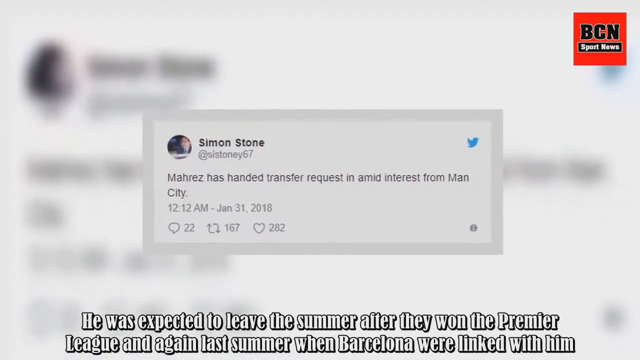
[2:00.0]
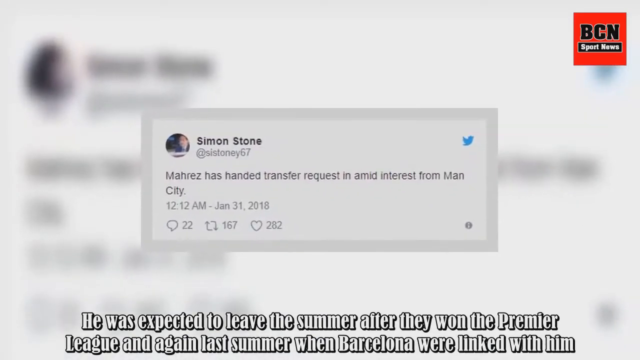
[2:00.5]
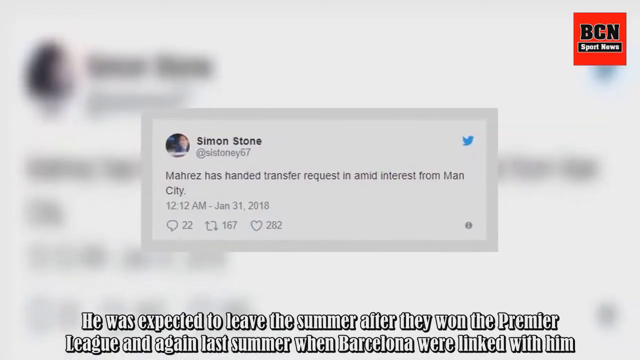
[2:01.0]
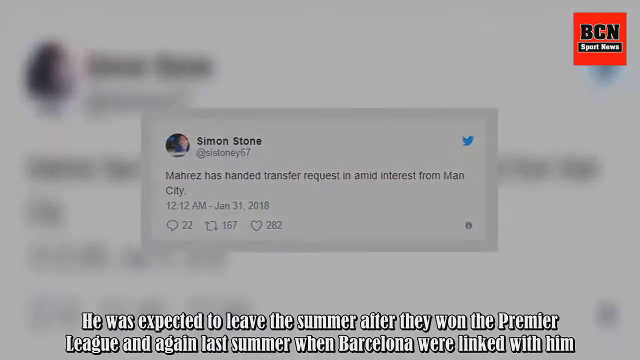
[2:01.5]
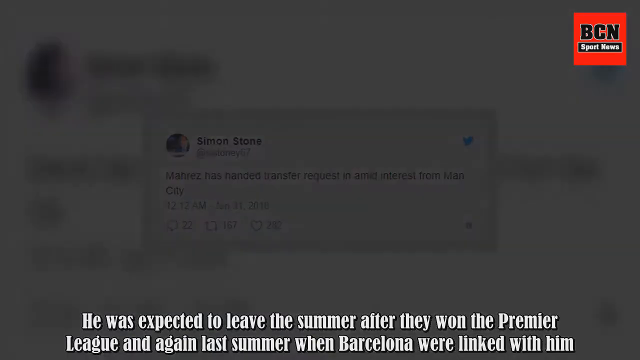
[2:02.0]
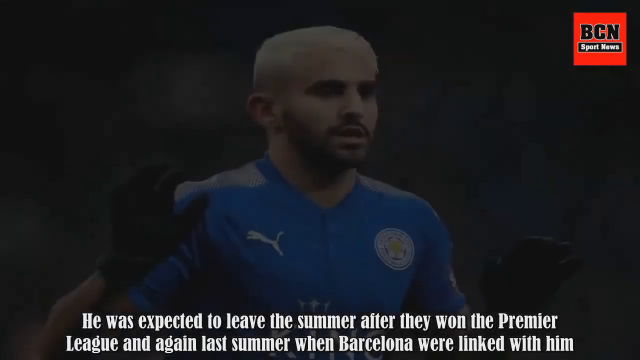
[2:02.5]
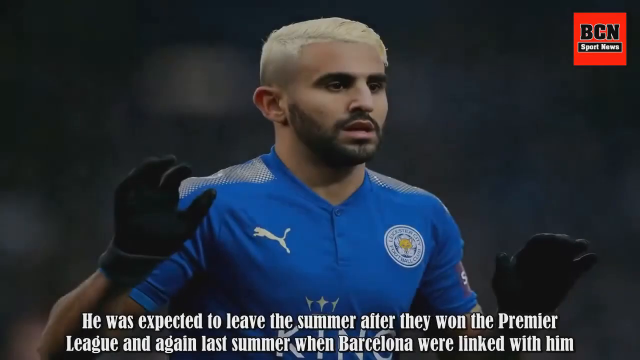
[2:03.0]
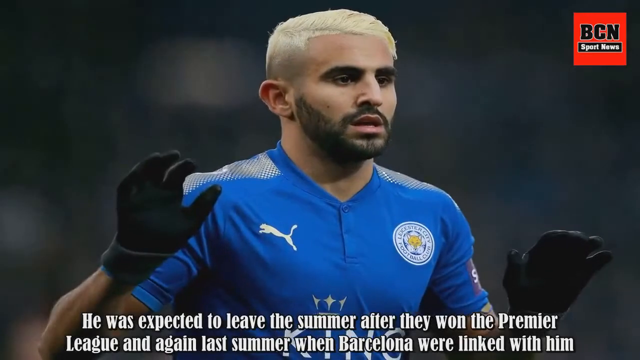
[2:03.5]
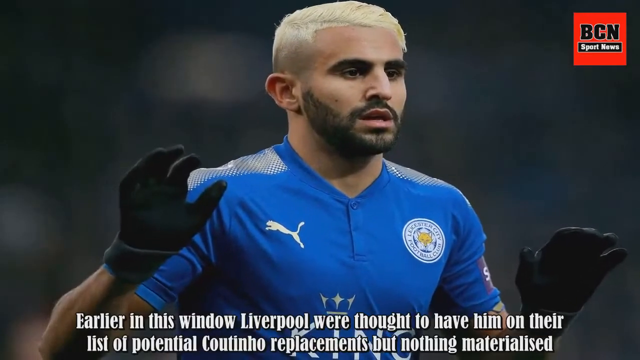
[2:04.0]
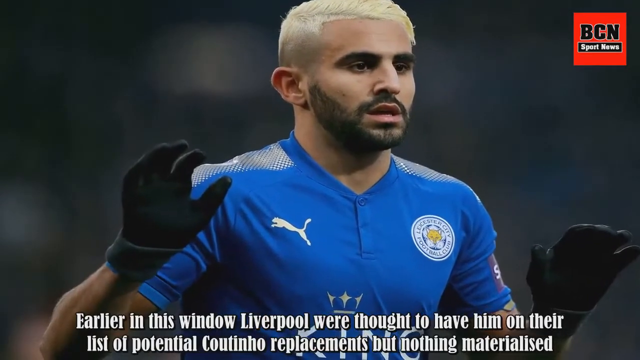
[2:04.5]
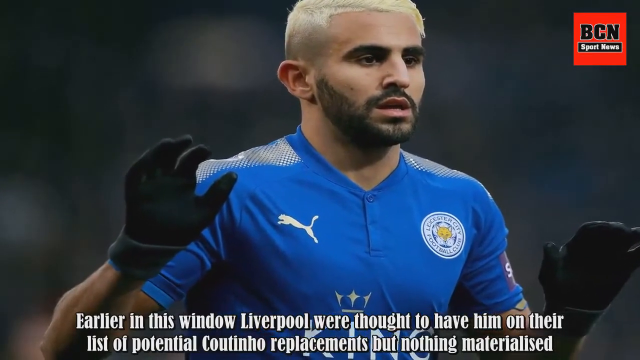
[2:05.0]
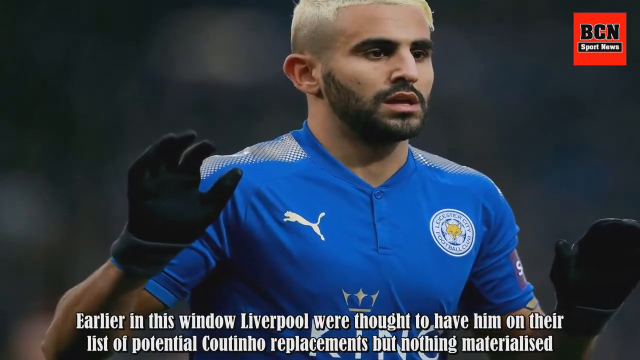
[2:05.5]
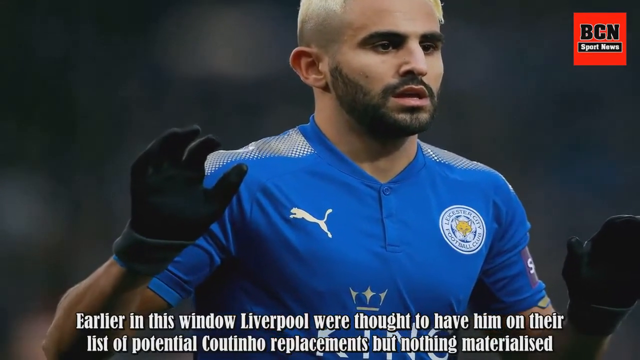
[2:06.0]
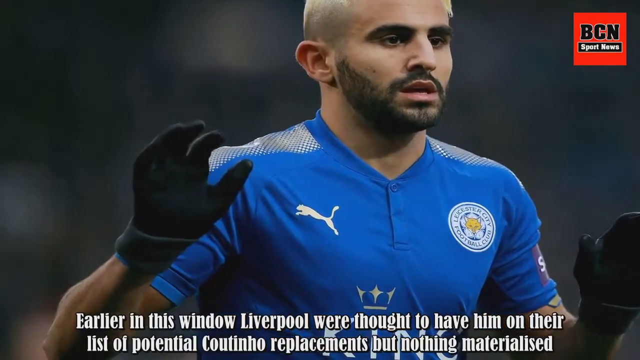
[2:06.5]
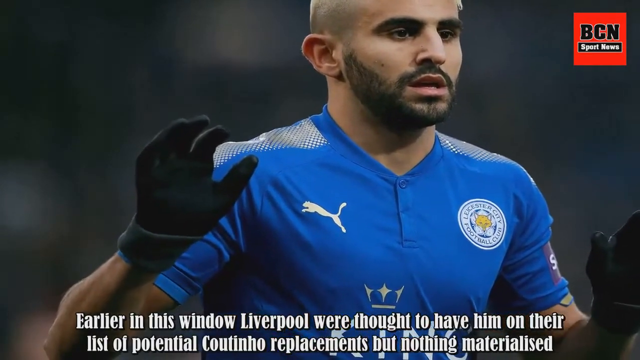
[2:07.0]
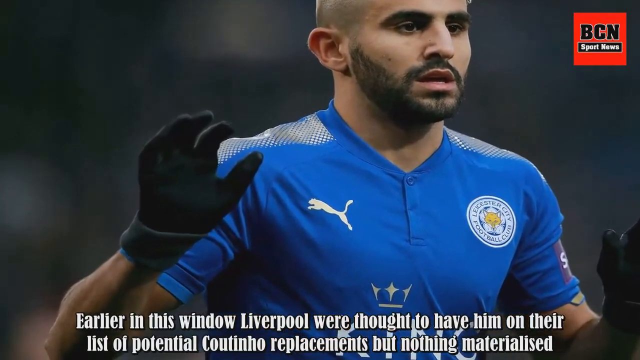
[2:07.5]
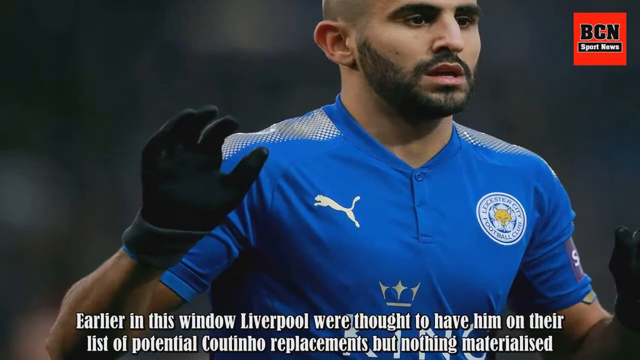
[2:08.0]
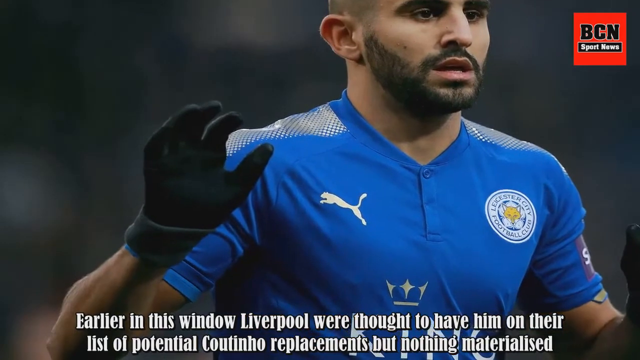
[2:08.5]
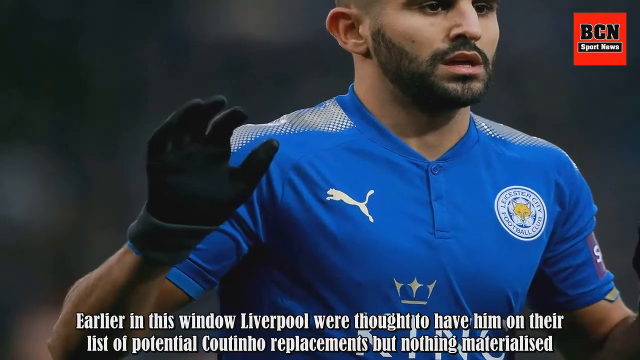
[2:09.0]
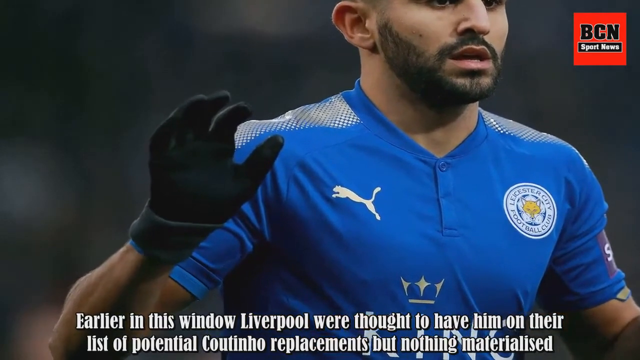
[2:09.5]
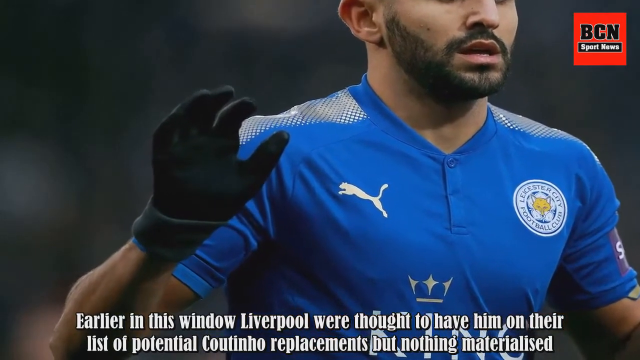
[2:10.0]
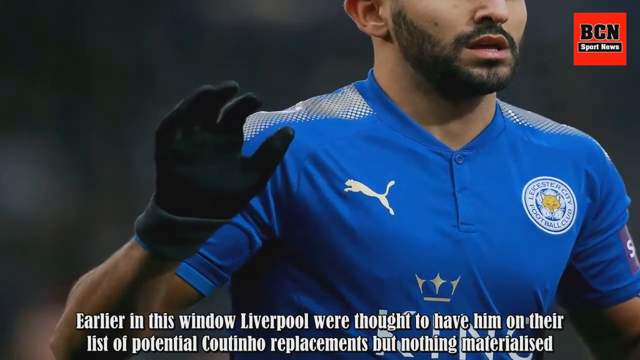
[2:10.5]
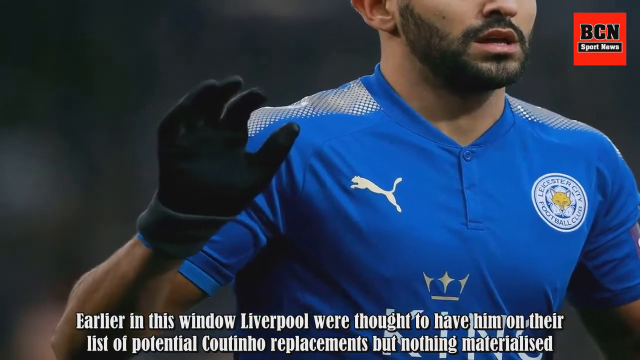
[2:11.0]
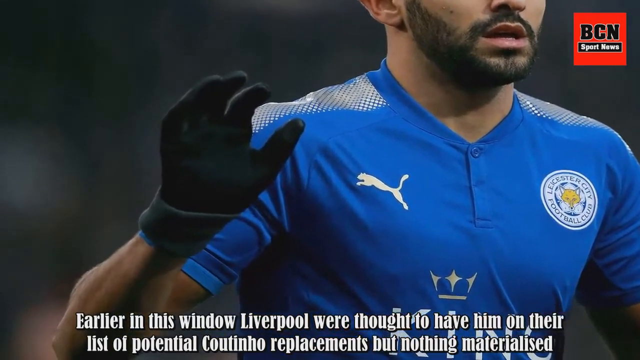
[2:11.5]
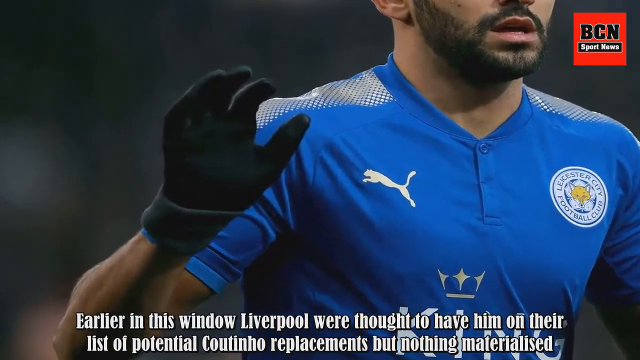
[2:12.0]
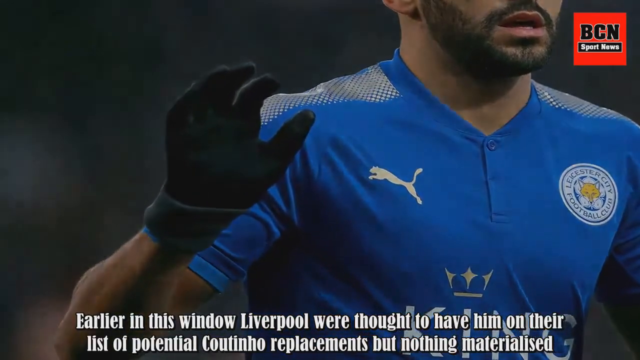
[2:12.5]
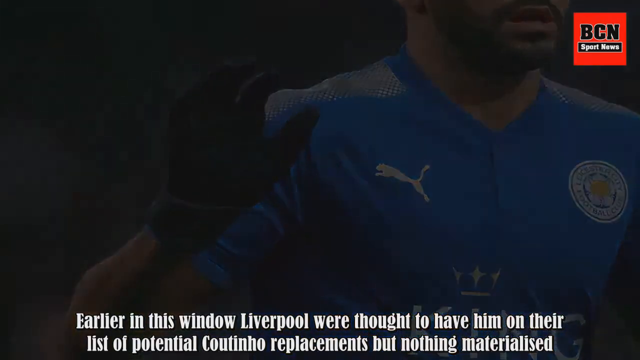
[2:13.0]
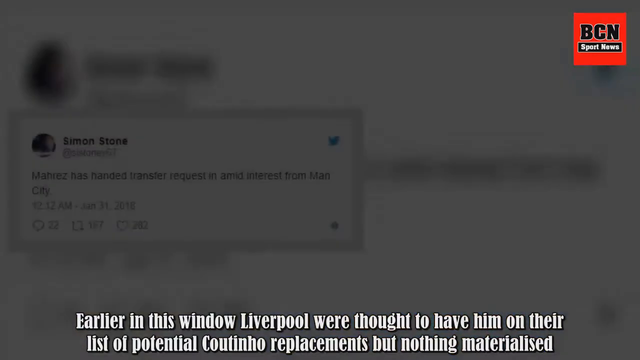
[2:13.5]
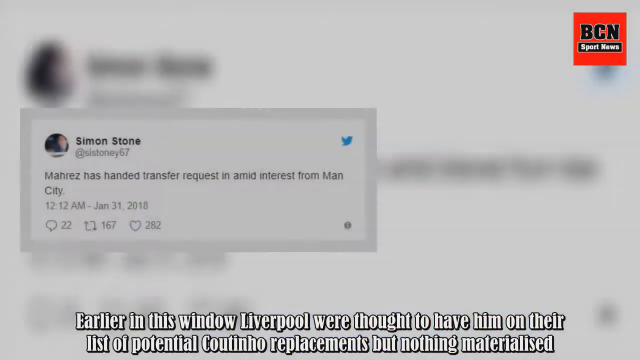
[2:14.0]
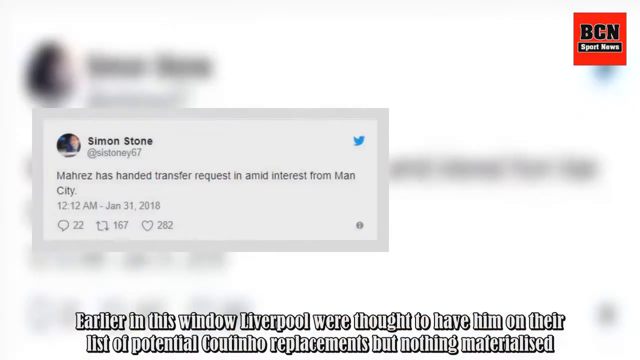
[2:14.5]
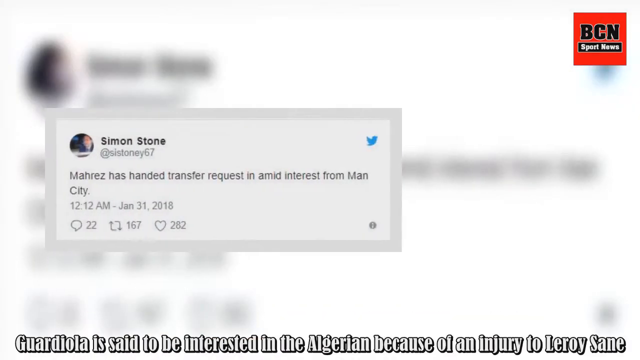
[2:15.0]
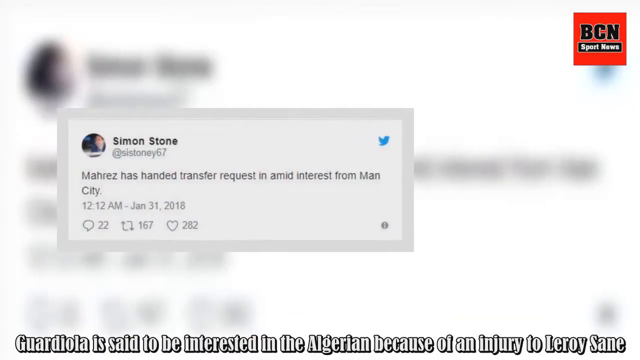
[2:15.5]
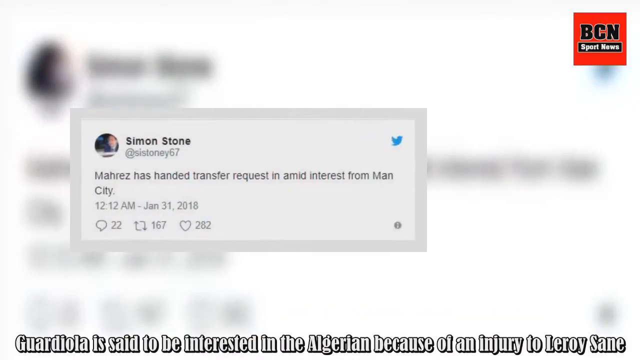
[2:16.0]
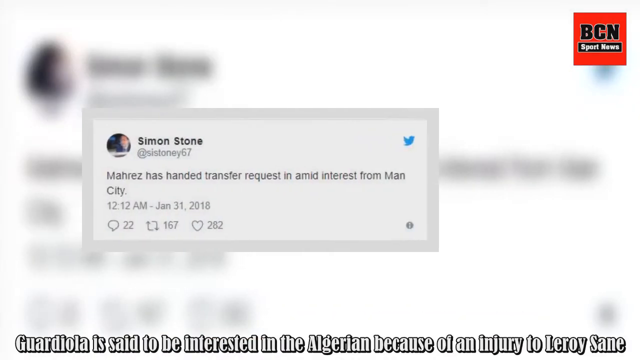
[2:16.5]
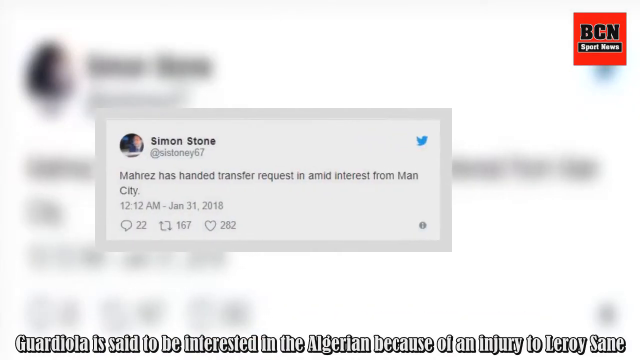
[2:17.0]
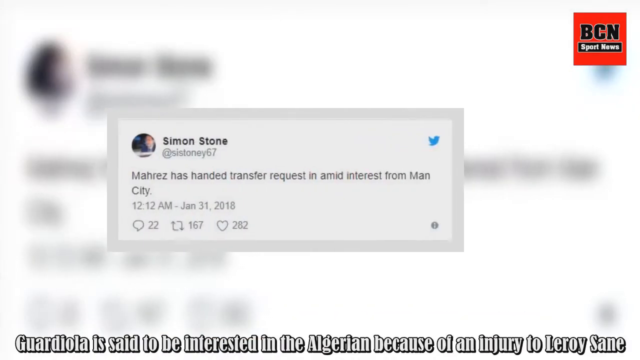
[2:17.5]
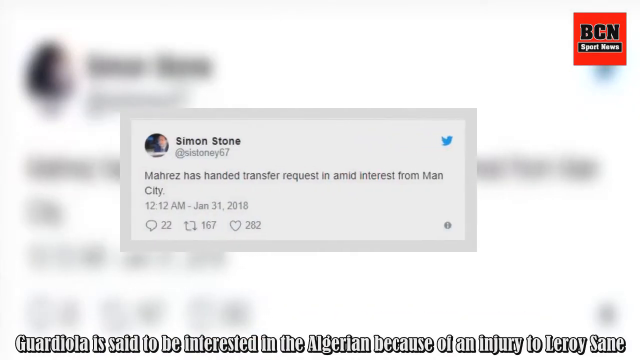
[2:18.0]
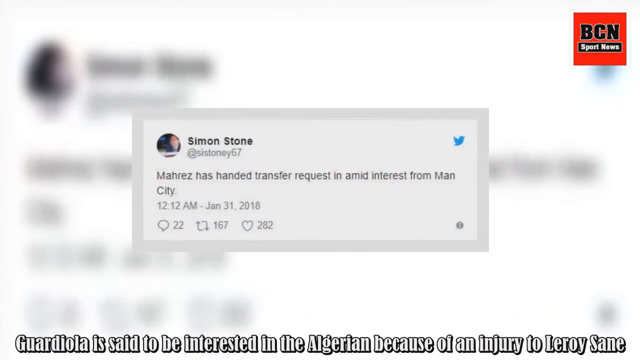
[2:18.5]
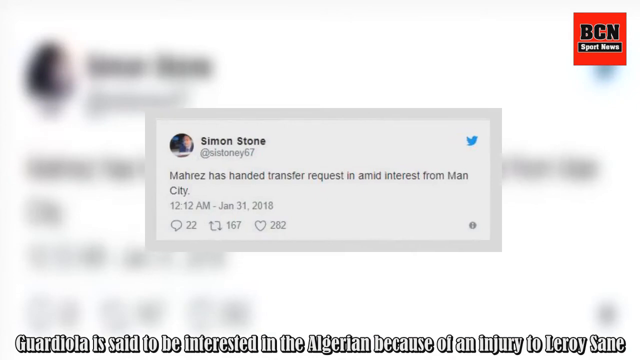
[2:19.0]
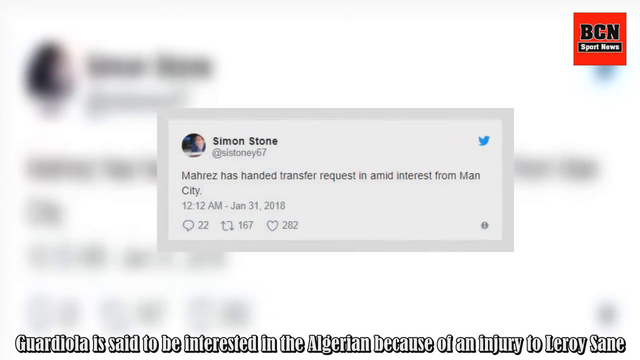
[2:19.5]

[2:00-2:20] White text at the very bottom of the screen mentions a transfer request, says "he was expected," and mentions Liverpool having him on their list, "but nothing materialized." A tweet from Simon Stone about a transfer request and Man City is shown, with a logo in its top right. "BCN Sports News" appears in black text over a red background in the top right of the screen. The tweet is shown small and sharp in the middle of the screen over a background so blurry that none of its text can be read.